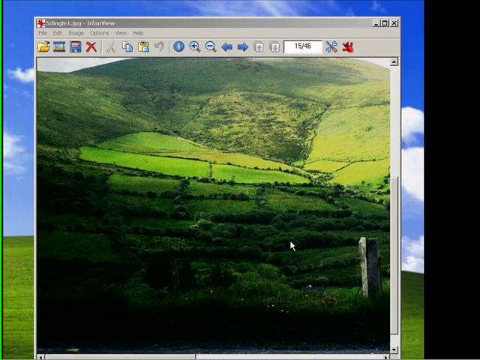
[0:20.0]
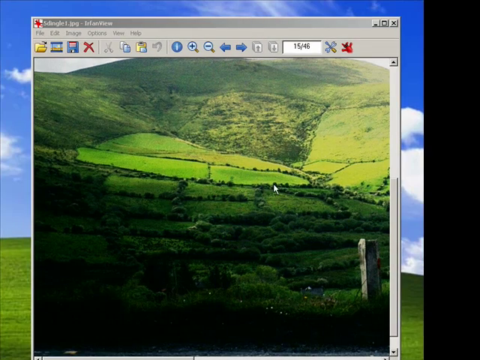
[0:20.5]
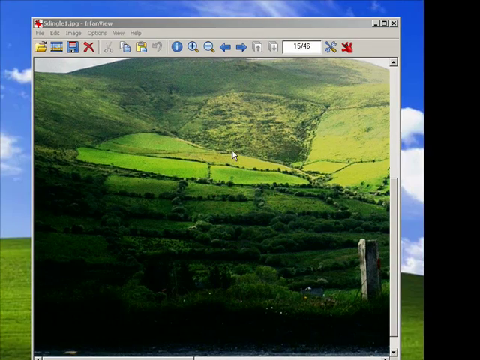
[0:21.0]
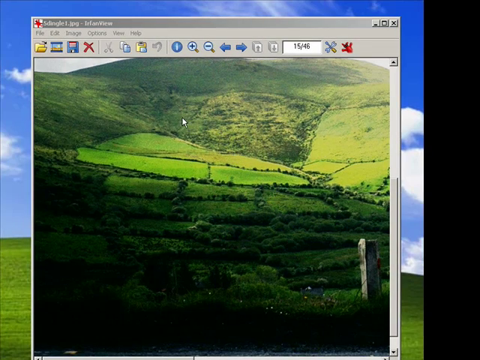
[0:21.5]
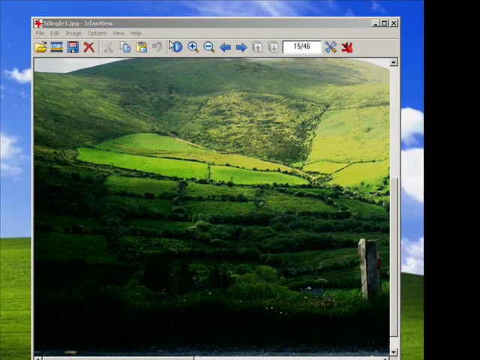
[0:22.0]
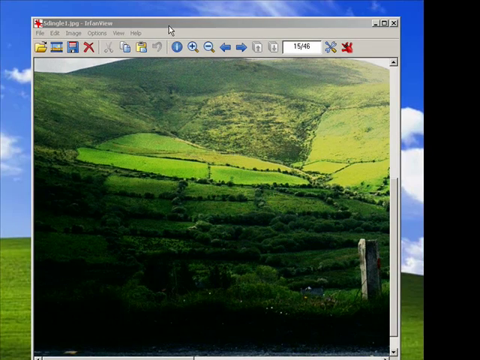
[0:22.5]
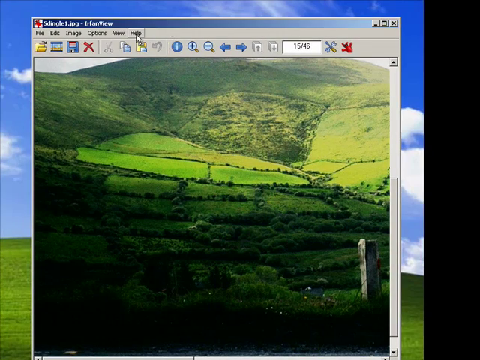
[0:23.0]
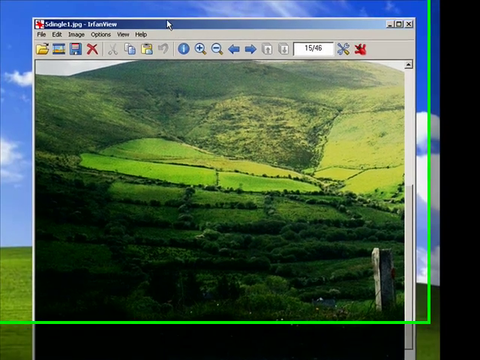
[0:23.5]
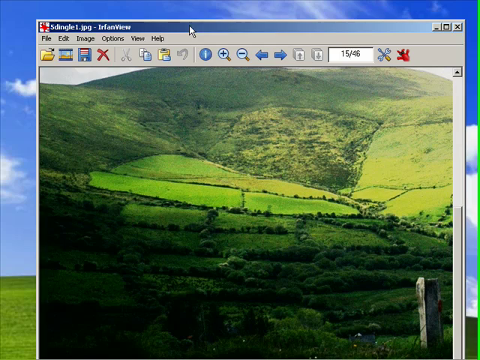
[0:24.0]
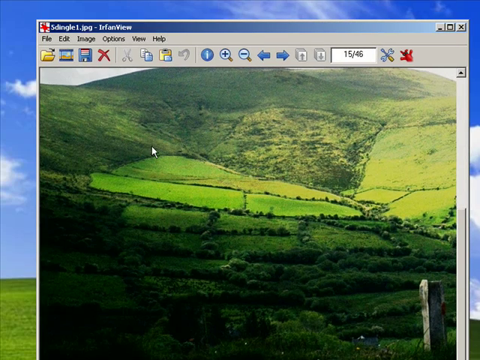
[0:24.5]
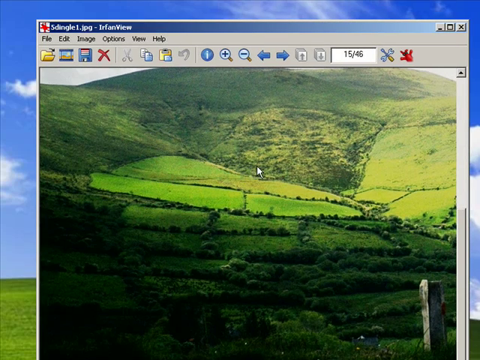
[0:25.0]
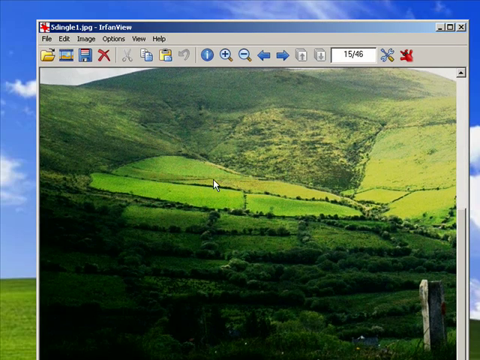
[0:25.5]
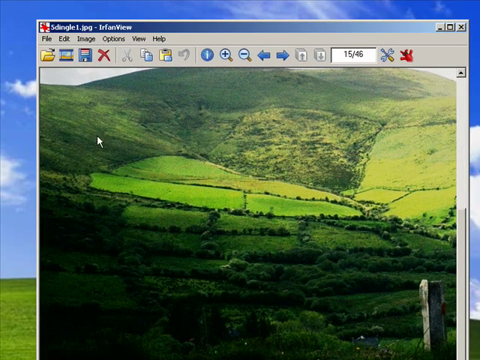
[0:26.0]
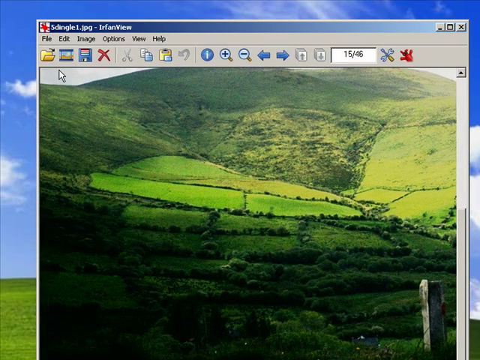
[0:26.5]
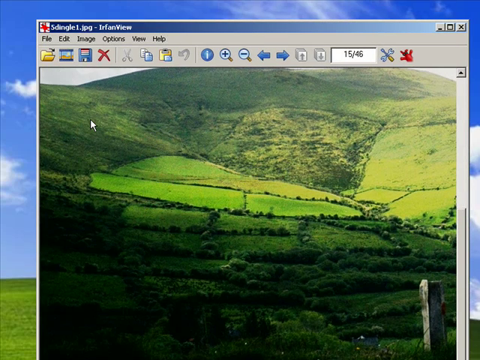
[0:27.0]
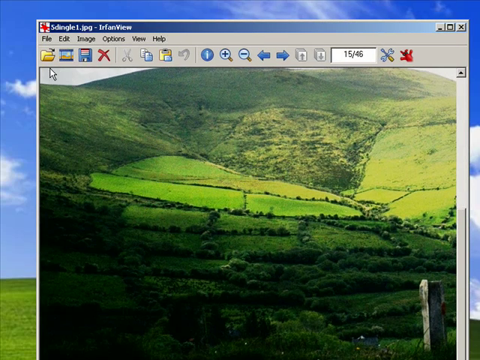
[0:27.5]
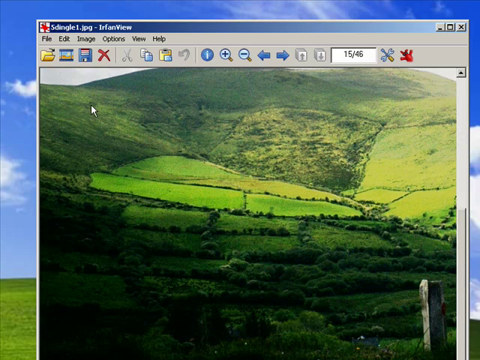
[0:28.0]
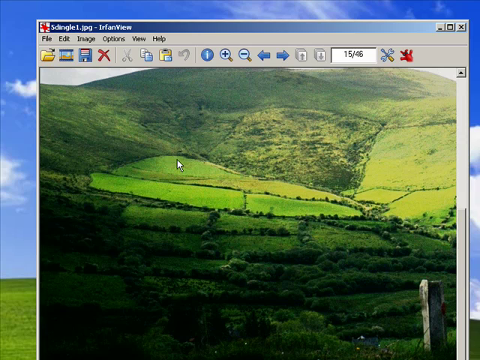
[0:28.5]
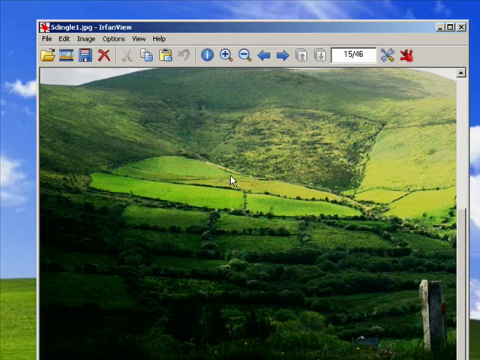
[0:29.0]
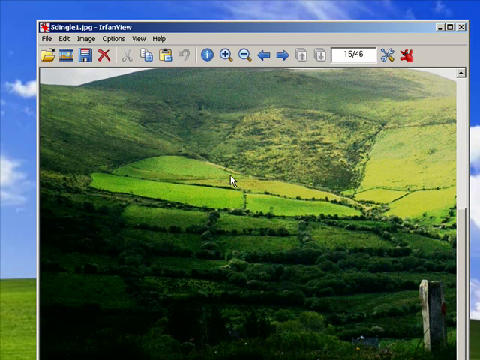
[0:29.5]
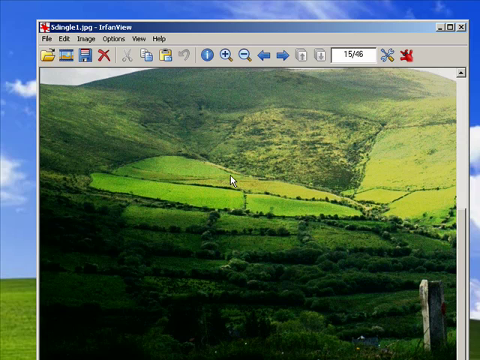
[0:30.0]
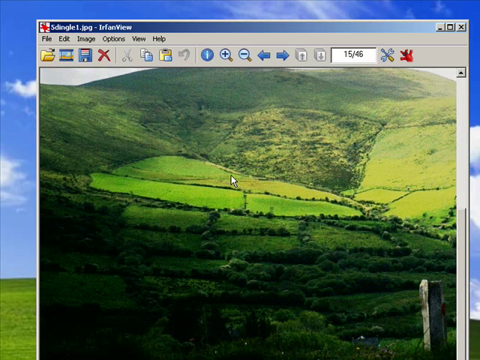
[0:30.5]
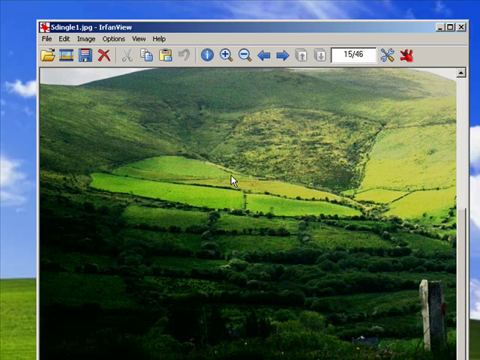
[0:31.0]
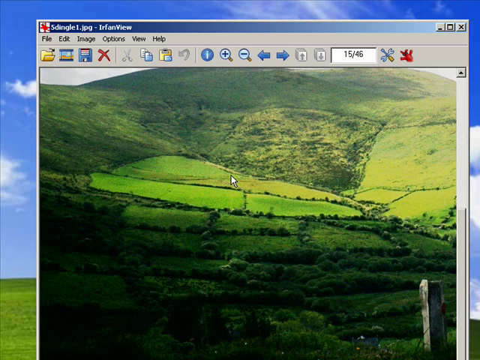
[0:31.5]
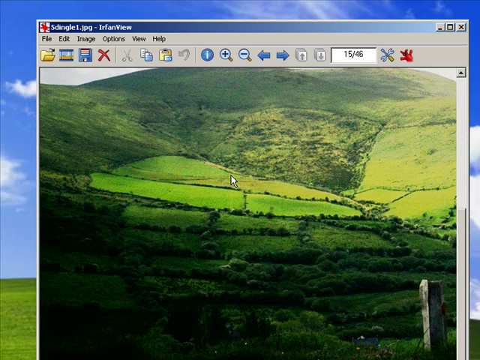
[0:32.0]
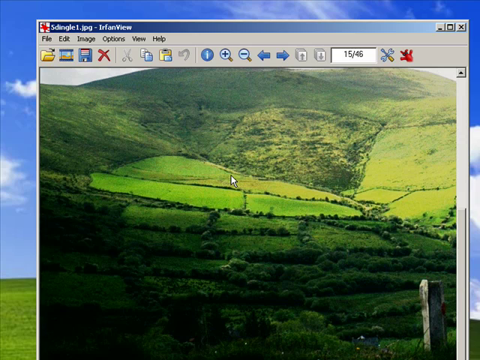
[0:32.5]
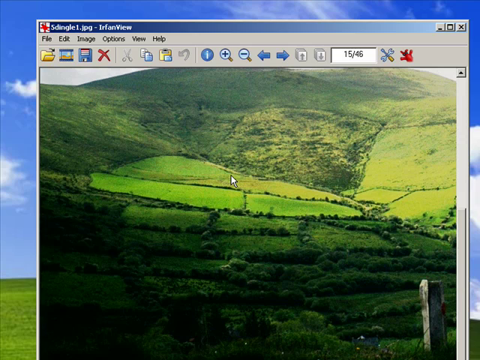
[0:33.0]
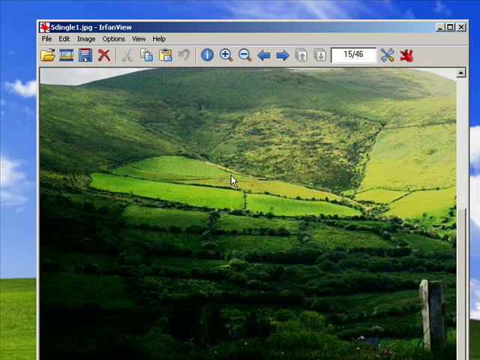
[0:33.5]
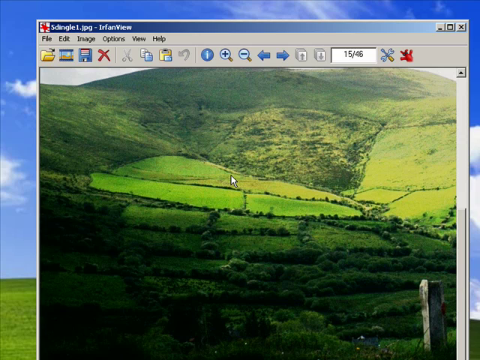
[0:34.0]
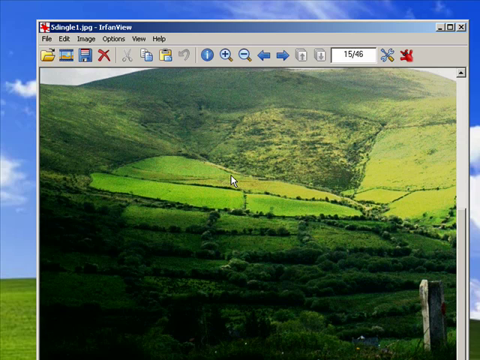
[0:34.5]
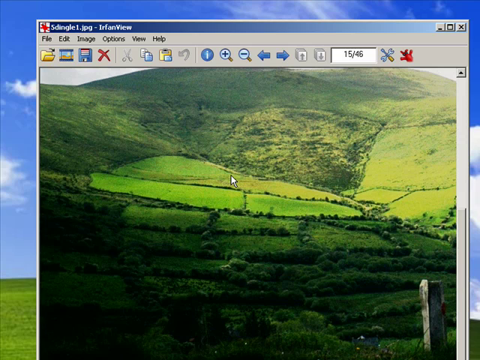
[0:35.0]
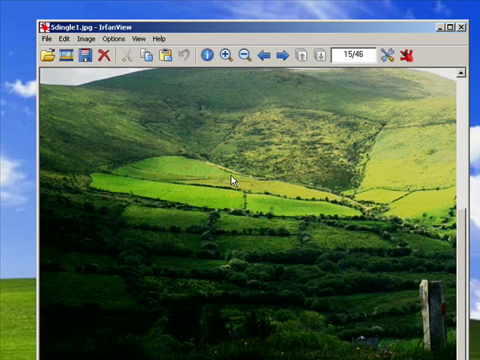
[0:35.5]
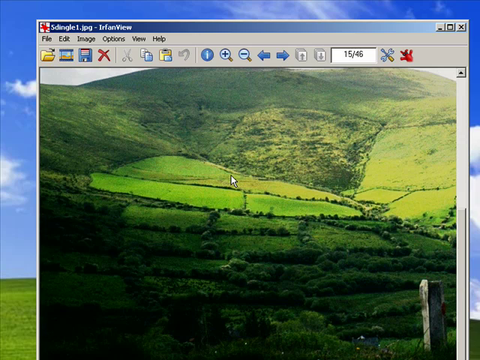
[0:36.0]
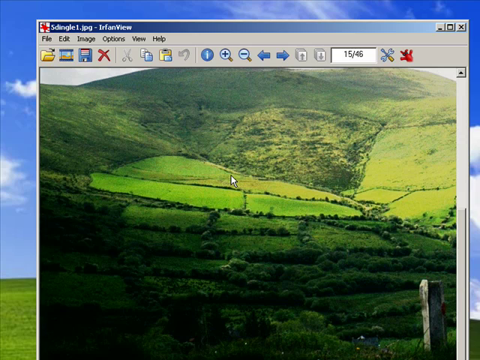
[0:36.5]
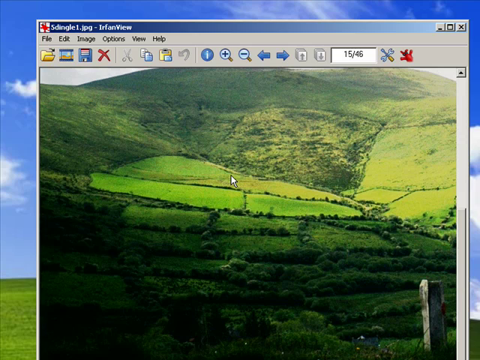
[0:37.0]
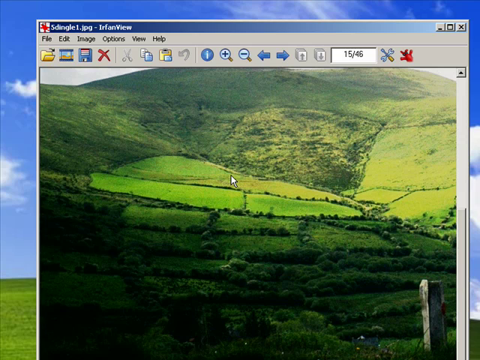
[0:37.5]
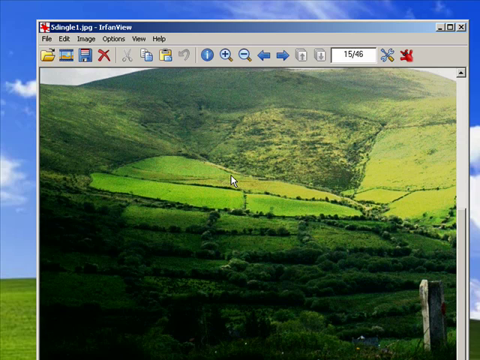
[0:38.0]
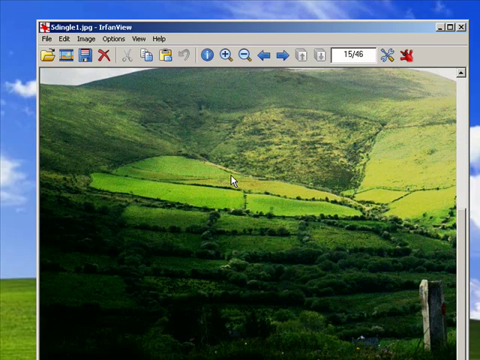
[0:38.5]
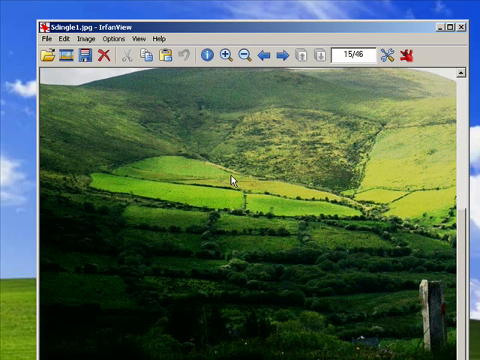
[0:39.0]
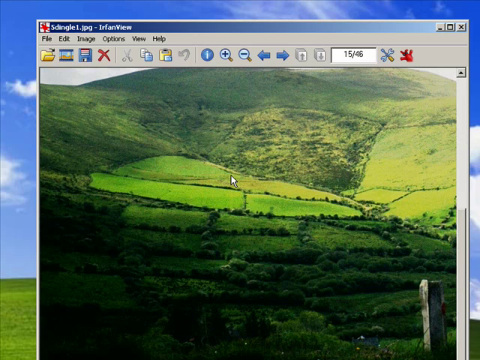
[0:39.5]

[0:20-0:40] An open computer screen shows a photograph of what looks like rolling green hills, with the land divided into rectangles delineated by bushes and trees. In the lower right of the photo there appears to be a tall stone block. A cursor moves around the screen, reaches up to the title bar and highlights it. The screen is slightly blurry, but the title bar text appears to read "Shingle 1.jpg Irfanview." The screen pulls in closer as the cursor, which looks like a white arrow, moves repeatedly over the photo of the hills and at one point comes to a rest in the center of the screen. Above the photo is a toolbar, and around the open page the computer's screensaver is visible, which looks like a blue sky filled with clouds above a green field.